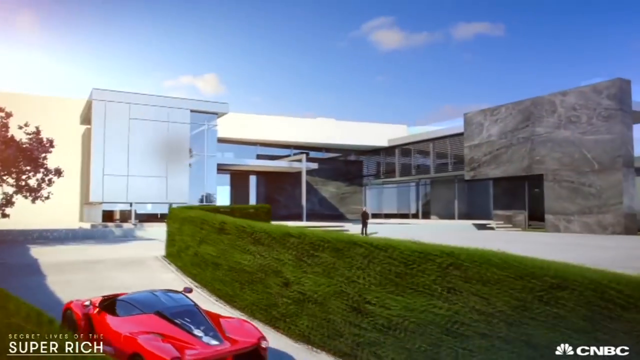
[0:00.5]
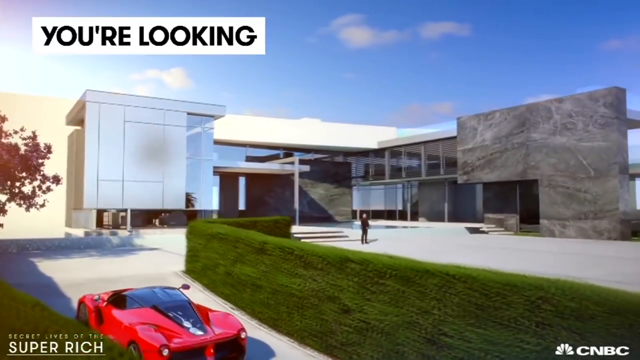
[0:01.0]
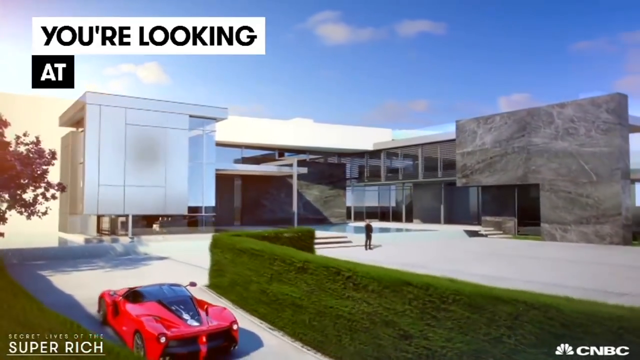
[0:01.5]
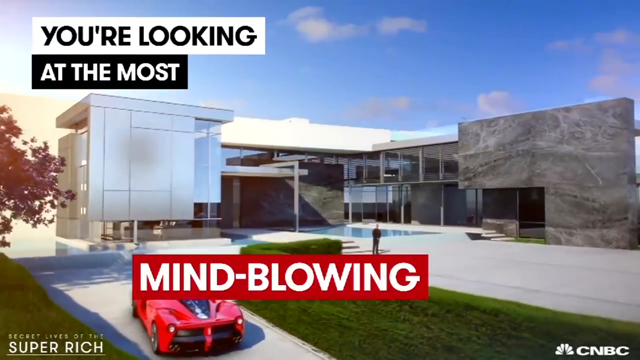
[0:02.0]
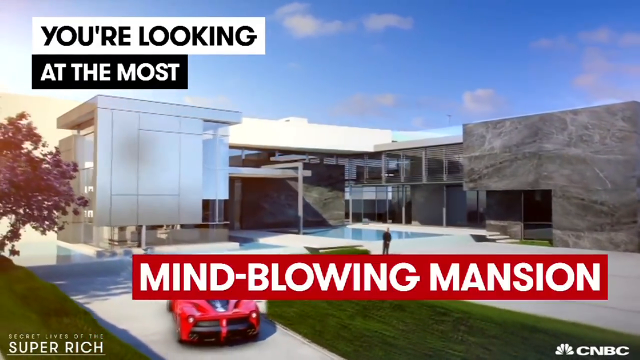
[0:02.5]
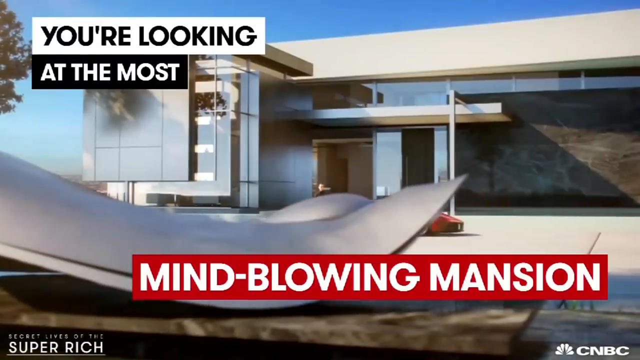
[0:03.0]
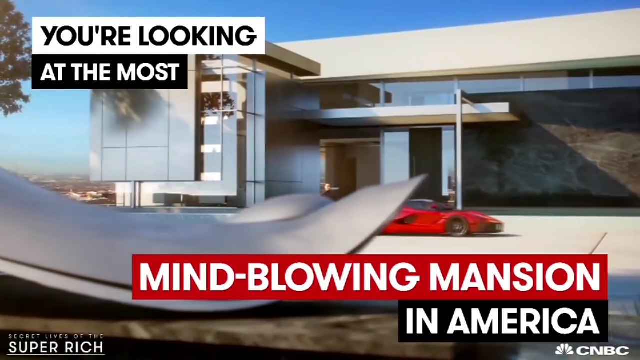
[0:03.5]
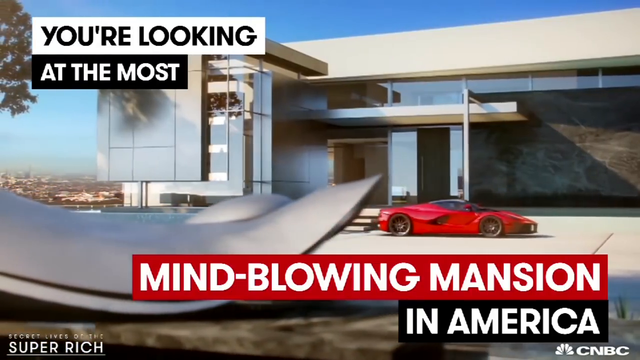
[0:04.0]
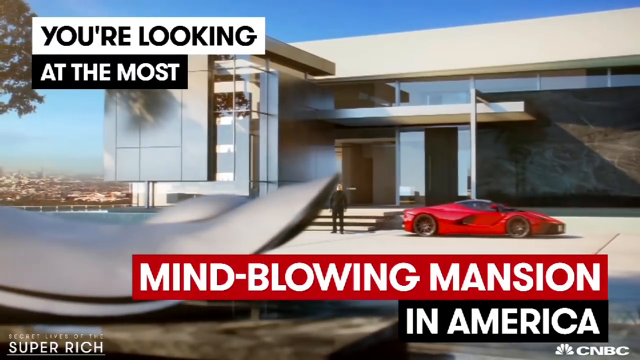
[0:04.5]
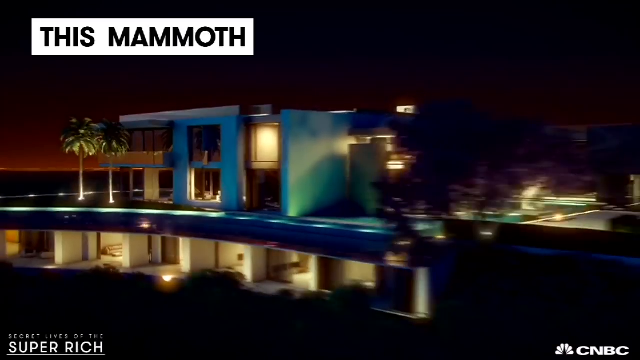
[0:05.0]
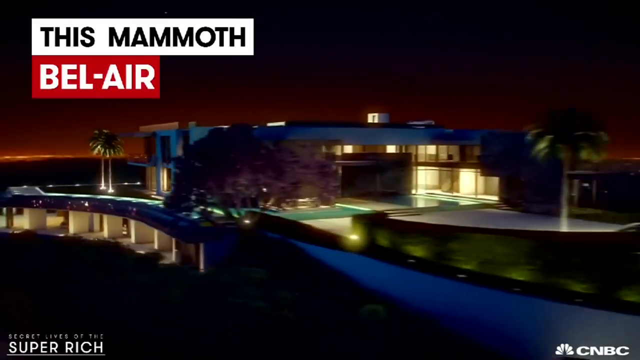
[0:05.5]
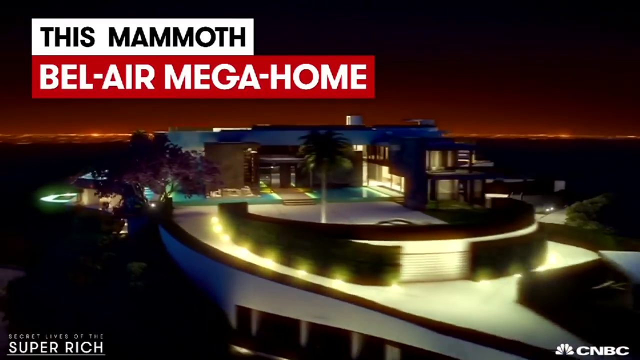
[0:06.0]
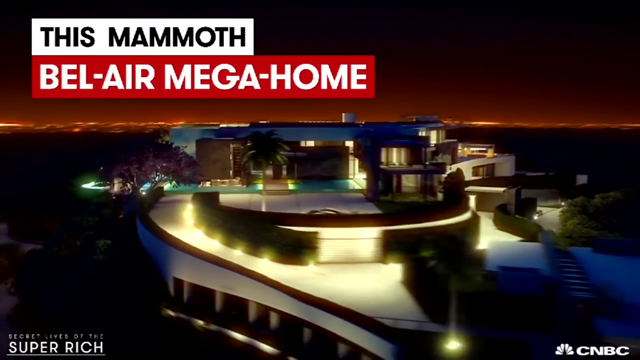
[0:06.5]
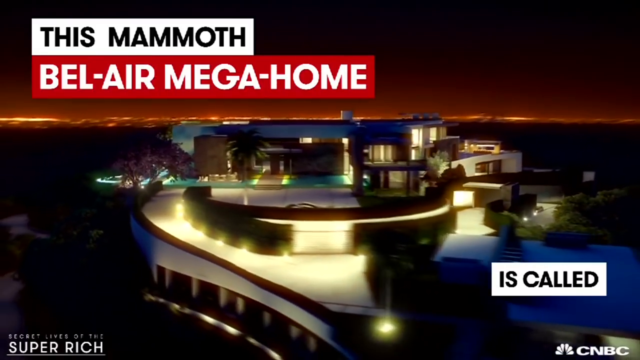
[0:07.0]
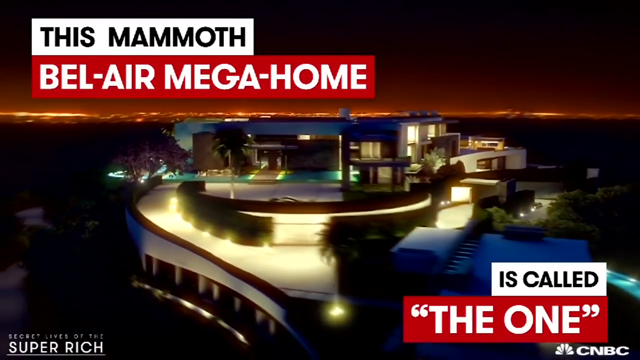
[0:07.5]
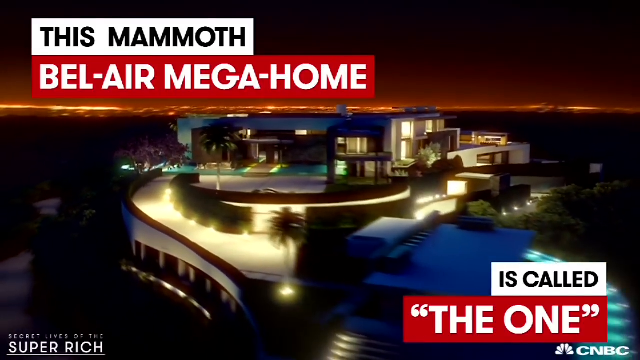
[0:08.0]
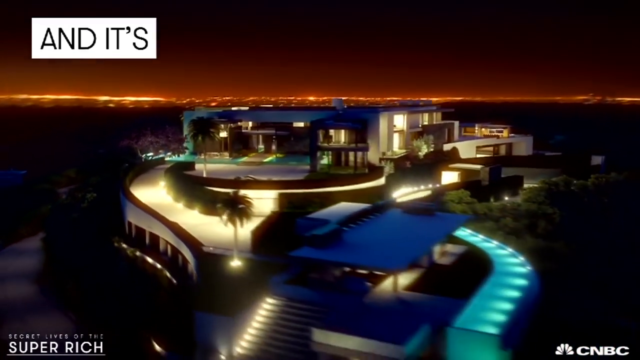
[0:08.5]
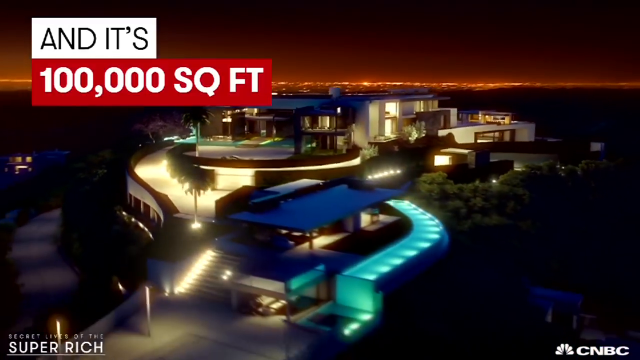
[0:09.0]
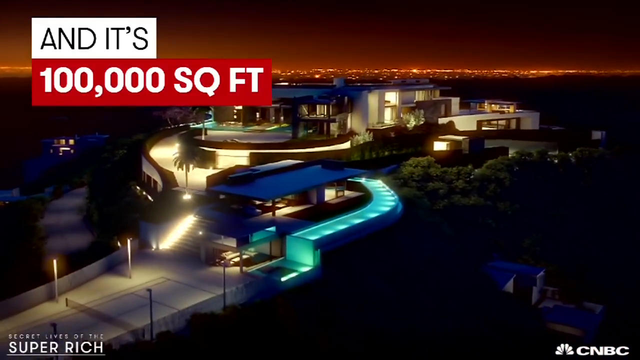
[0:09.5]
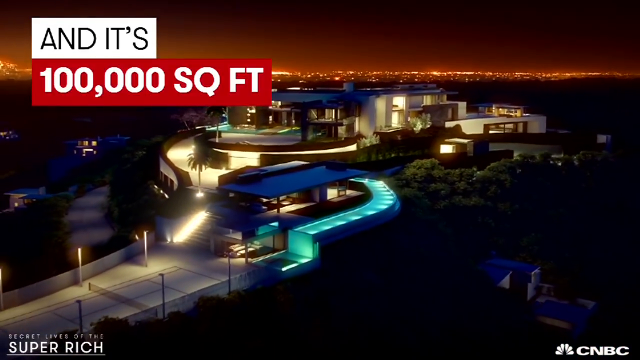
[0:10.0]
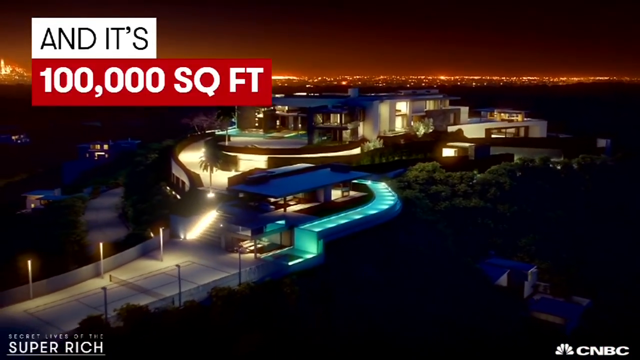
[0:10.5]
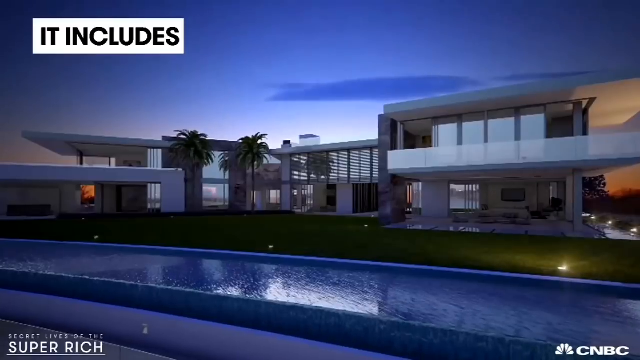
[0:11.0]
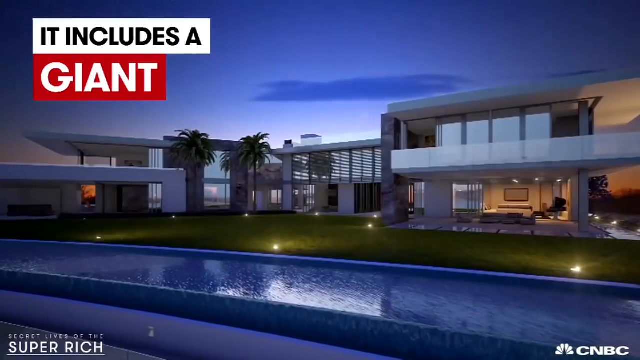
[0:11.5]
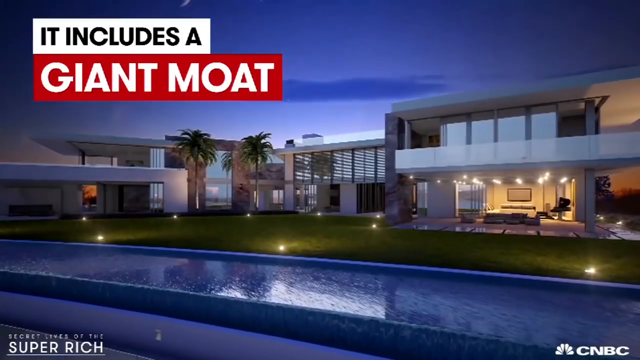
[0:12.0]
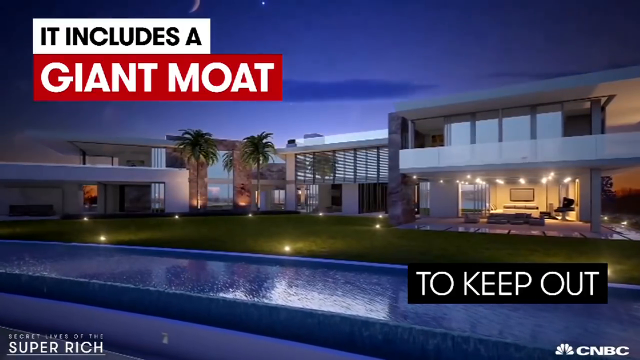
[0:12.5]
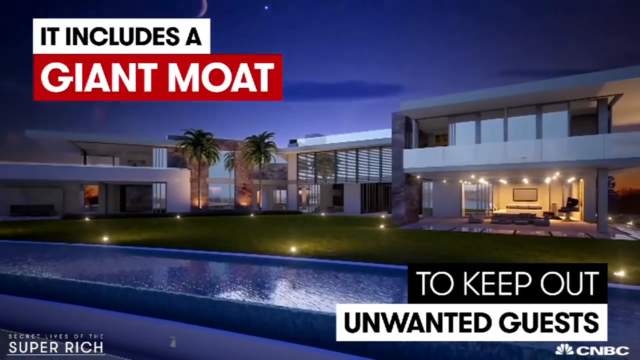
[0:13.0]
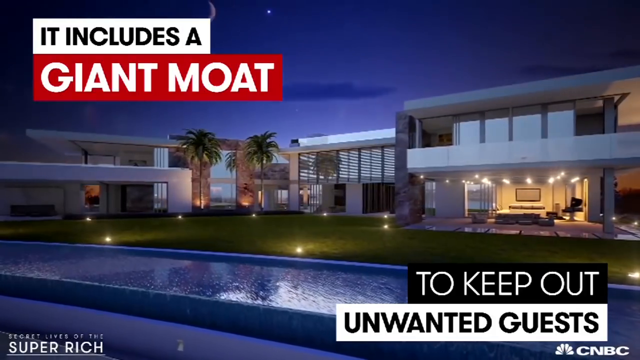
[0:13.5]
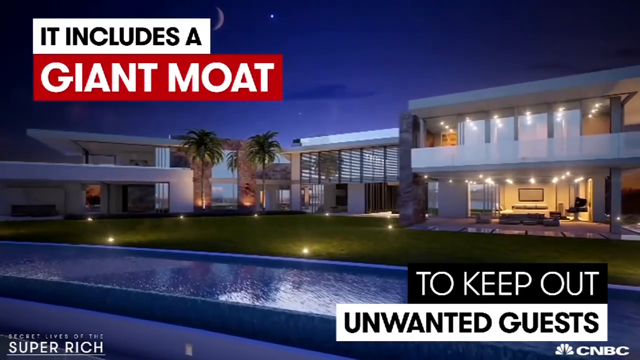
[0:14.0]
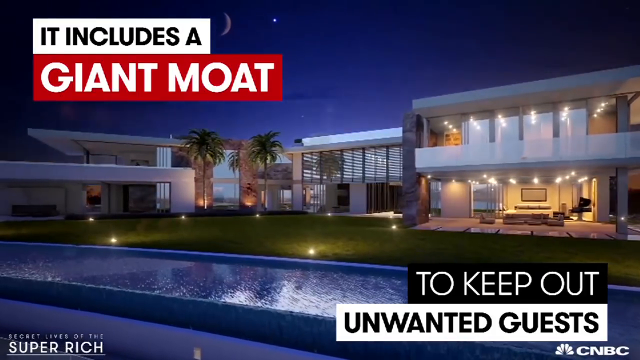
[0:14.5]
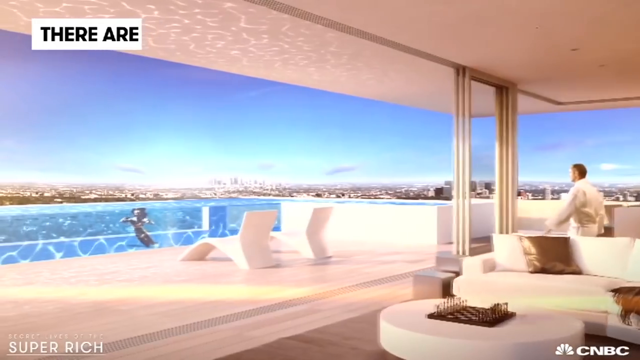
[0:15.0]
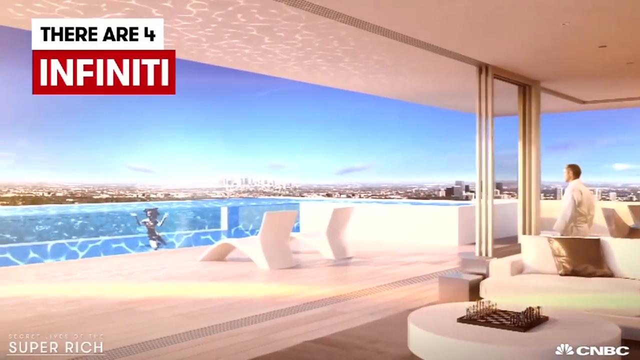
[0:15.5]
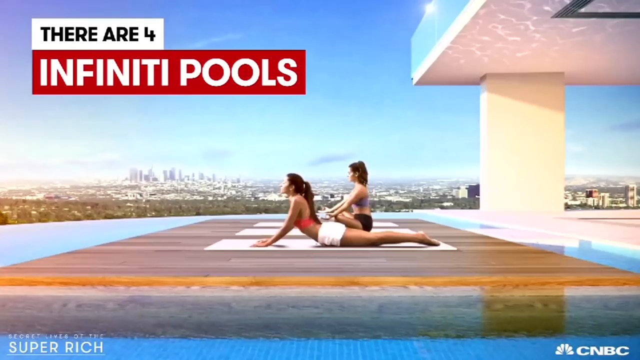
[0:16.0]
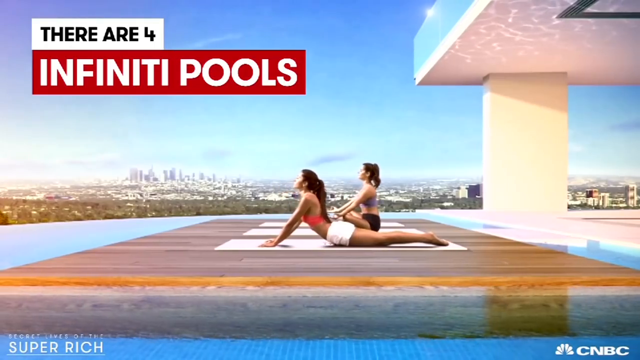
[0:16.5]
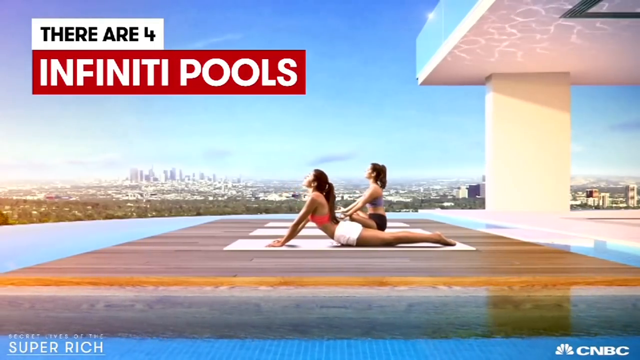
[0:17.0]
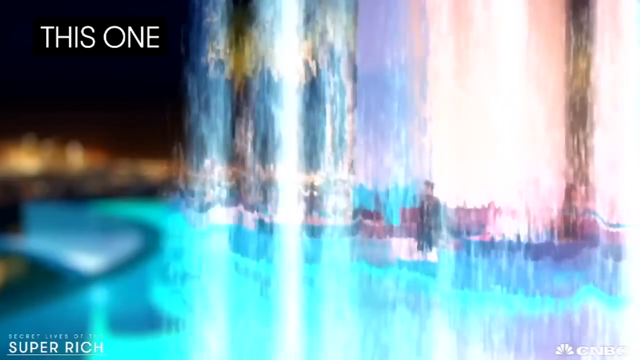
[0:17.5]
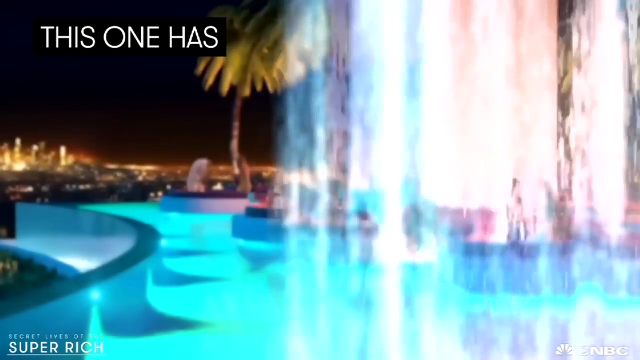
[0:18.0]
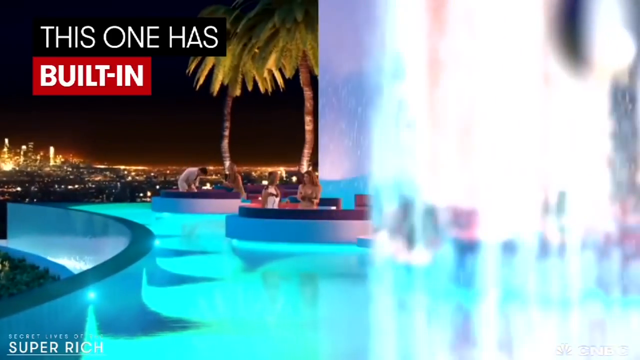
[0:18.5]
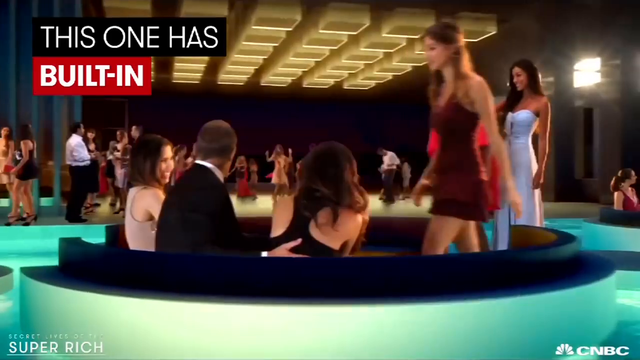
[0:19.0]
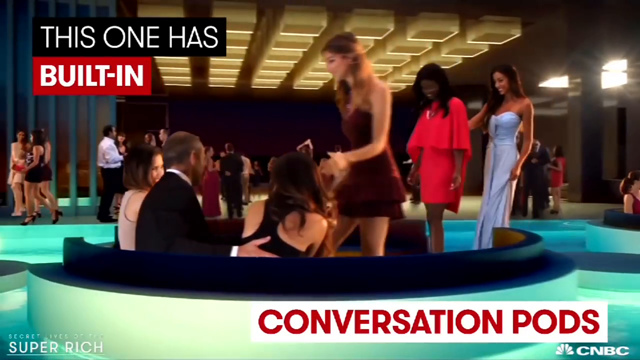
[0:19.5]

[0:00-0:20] A mansion in America, a Bel Air mega home, is shown, and the words on the screen call it "The One". The home has a giant moat, and it looks like an AI rendering. It is giant, with a fancy car pulling up in the front. It looks like a really nice mansion but also looks more like a resort. The structure is very modern looking and very large, with lots of lights and trees, and a moat goes all the way around the home.